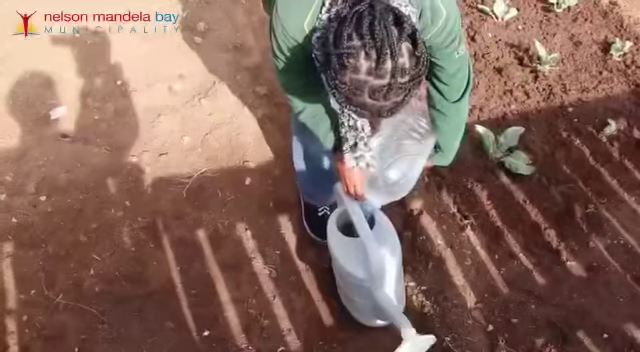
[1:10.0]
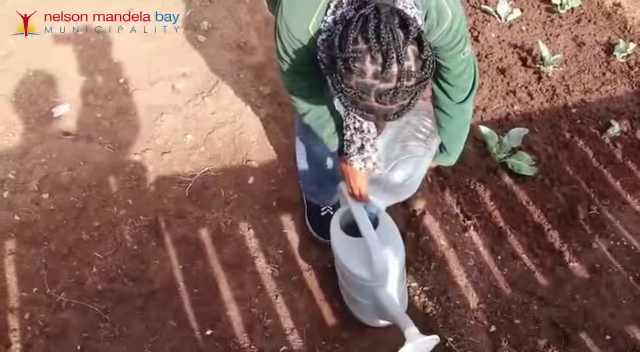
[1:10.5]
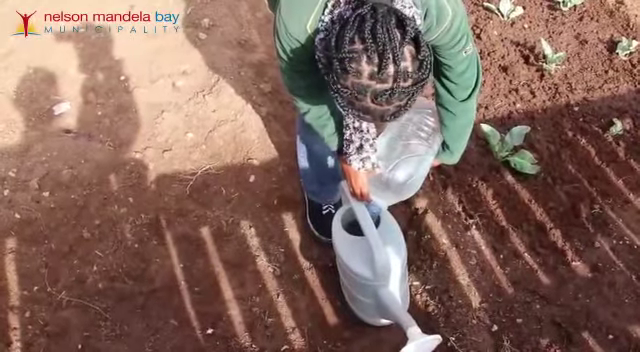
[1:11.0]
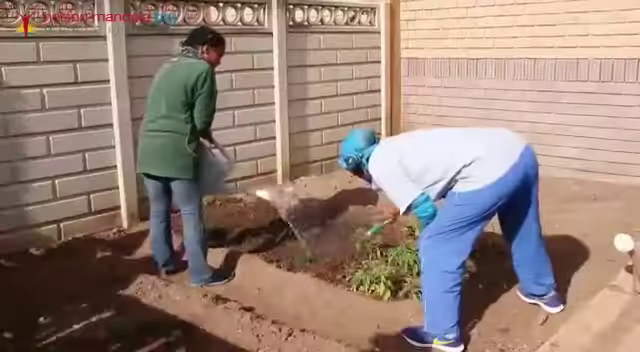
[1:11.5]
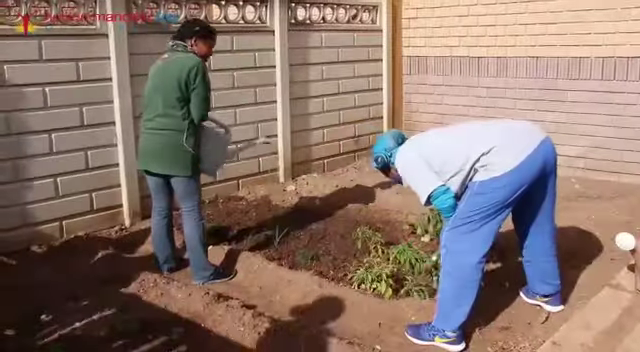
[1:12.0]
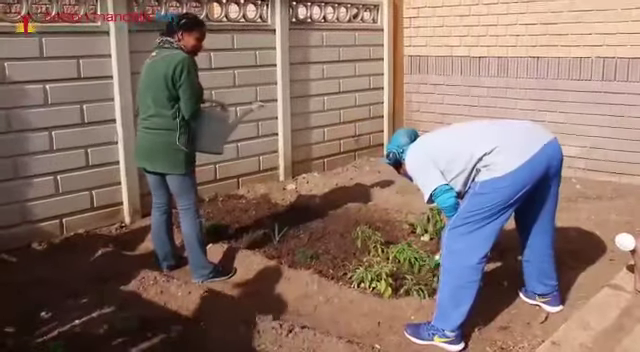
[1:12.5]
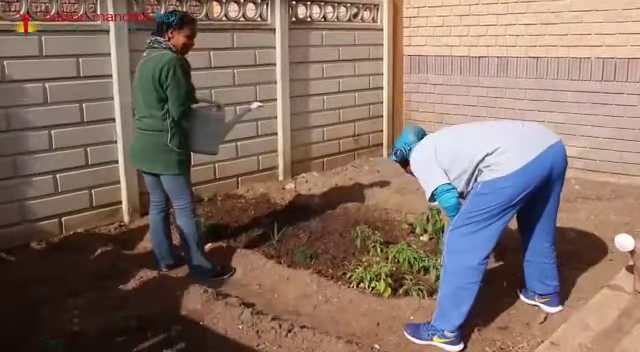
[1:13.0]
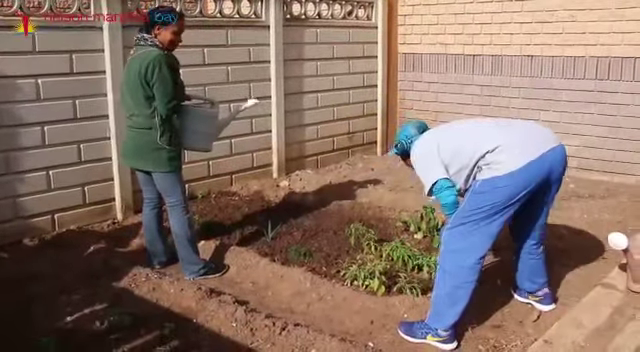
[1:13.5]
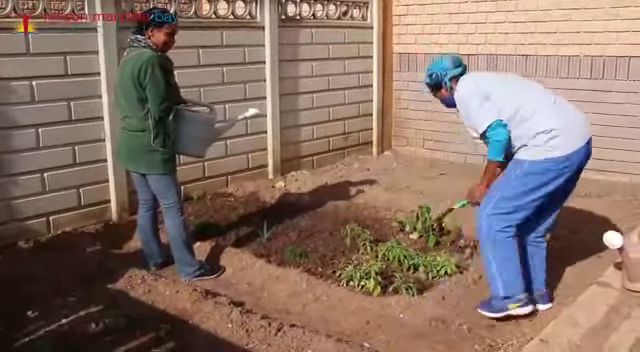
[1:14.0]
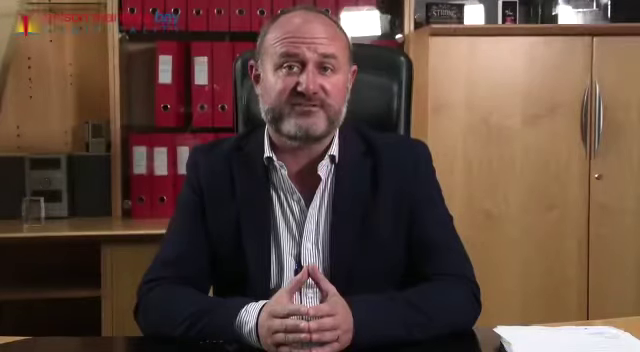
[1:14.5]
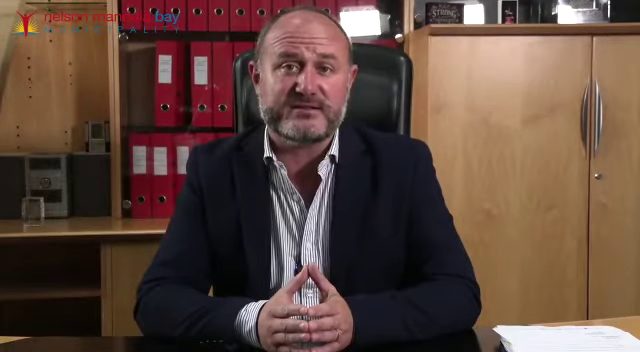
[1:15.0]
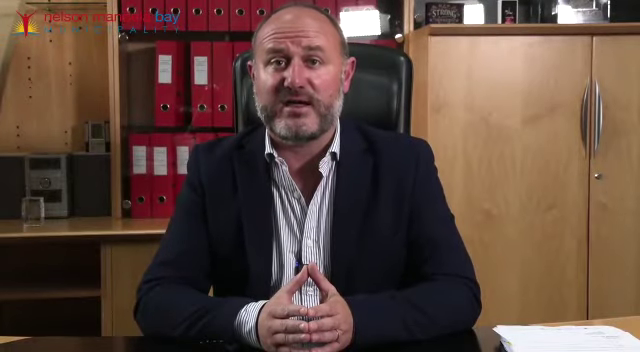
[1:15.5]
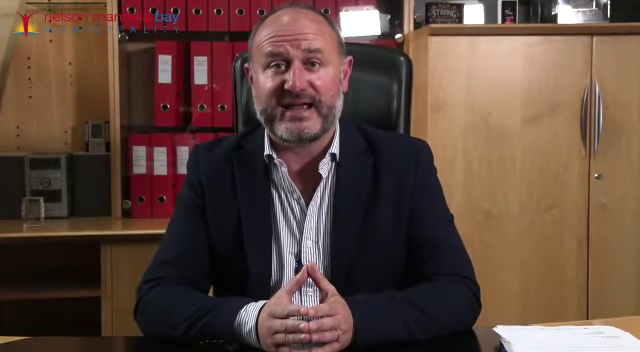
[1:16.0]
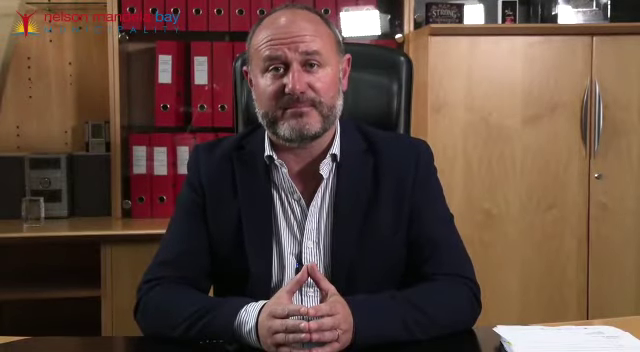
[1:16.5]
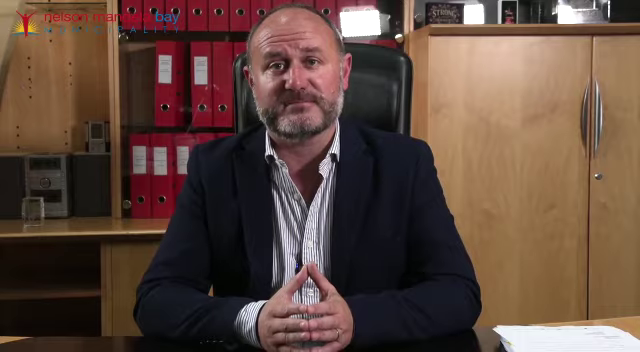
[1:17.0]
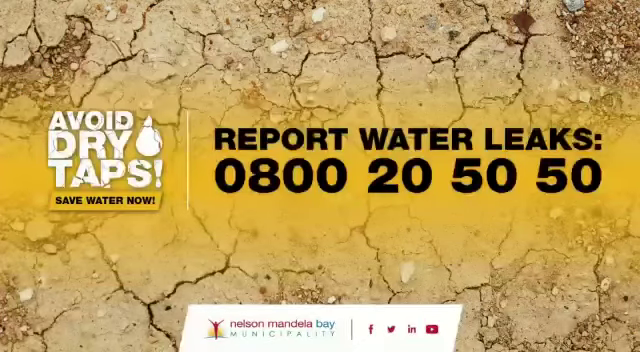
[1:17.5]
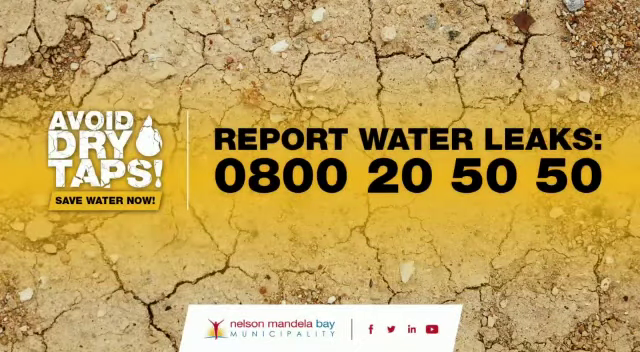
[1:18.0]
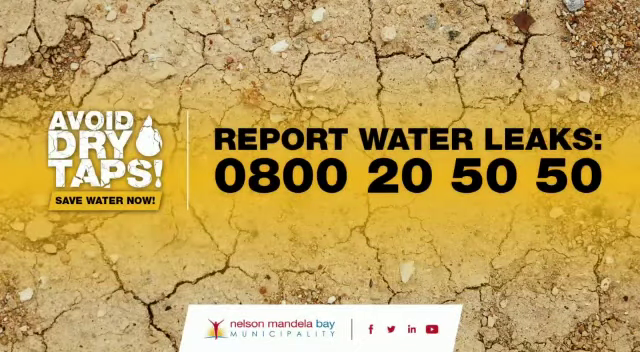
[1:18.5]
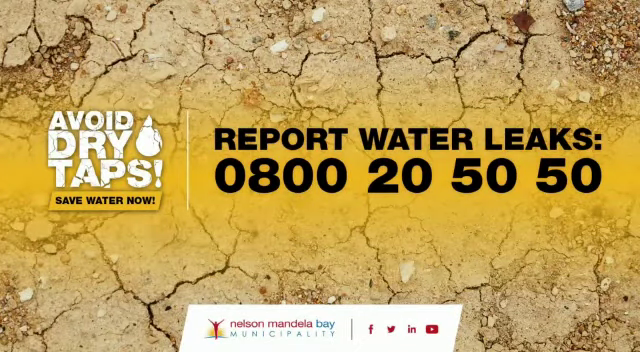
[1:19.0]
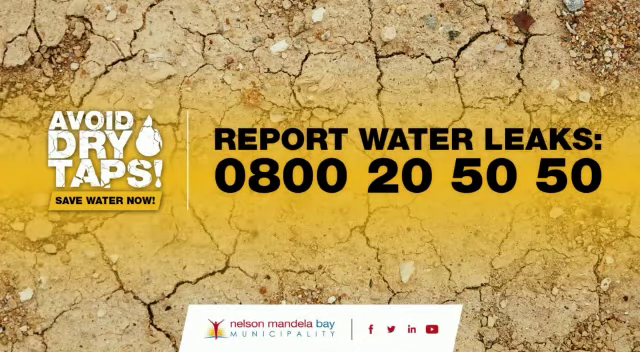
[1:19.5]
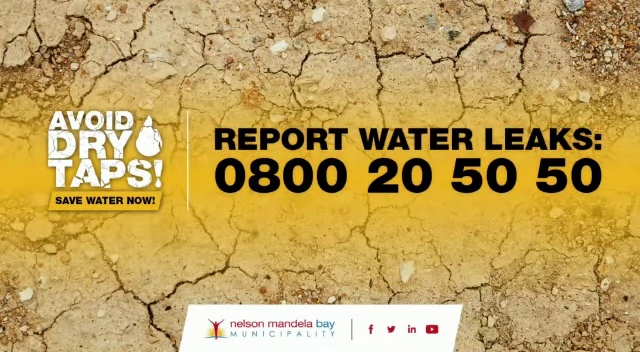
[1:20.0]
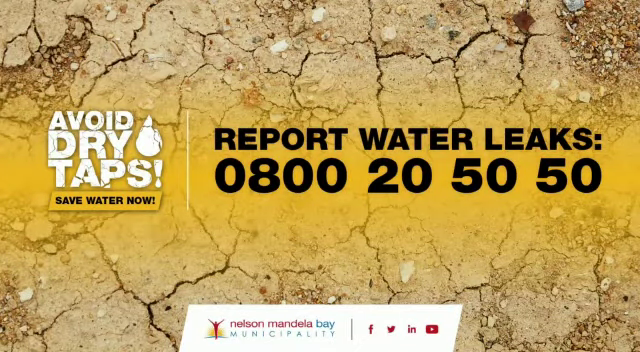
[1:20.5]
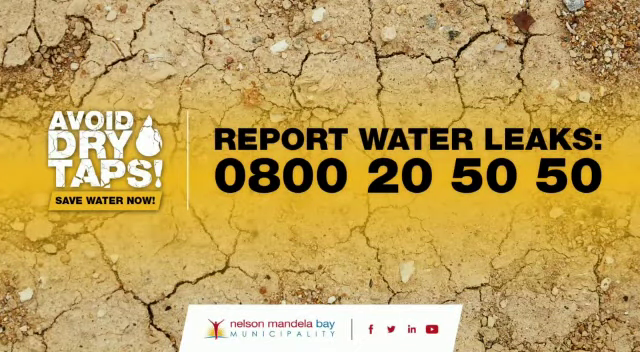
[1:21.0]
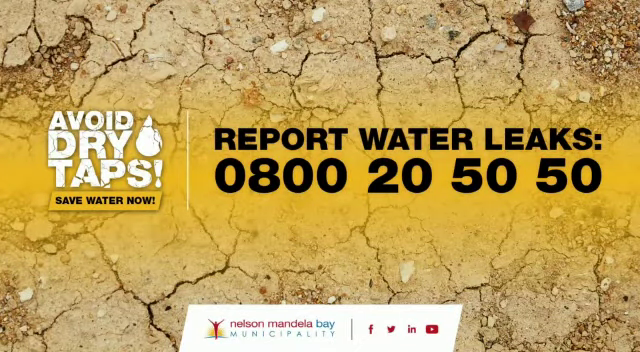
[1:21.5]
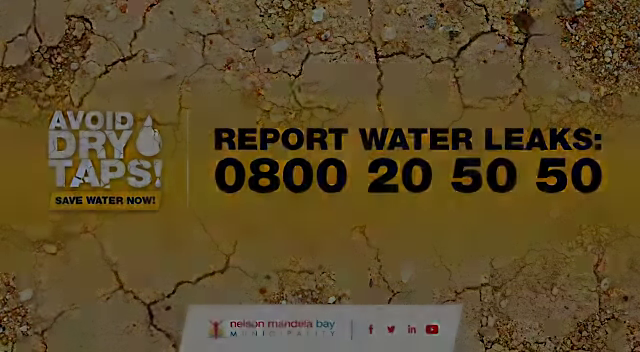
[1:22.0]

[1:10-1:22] Outdoors, people take the water and put it into watering jugs to use on plants they have growing. After filling the jugs, they prepare and then spread the water around on the plants. The same man is shown watering again, and then the text from the beginning of the video reappears, saying to report water leaks and to avoid dry taps.